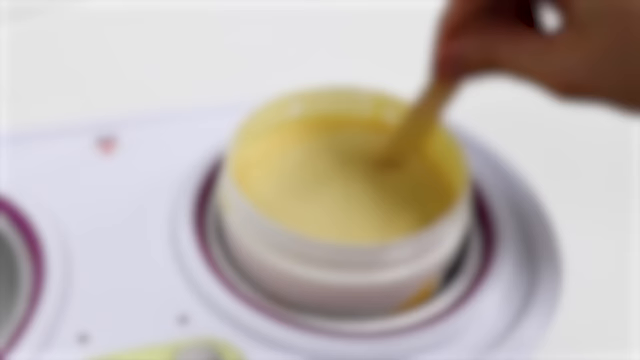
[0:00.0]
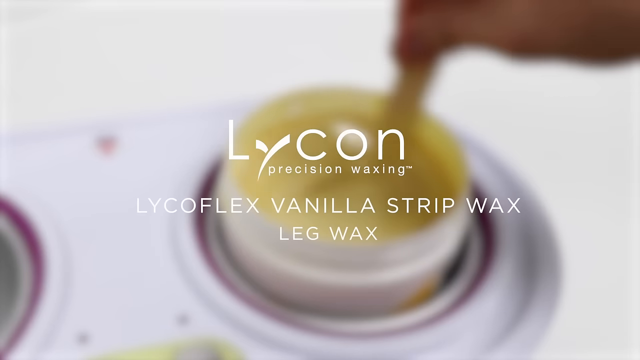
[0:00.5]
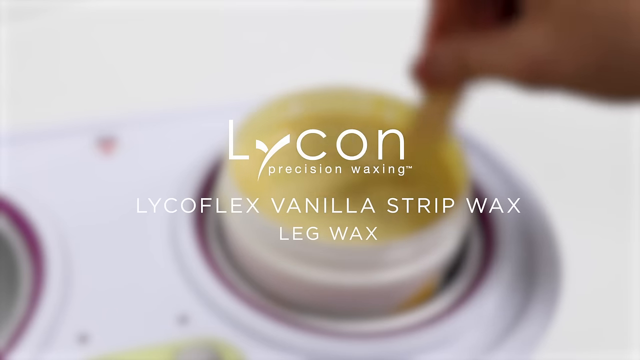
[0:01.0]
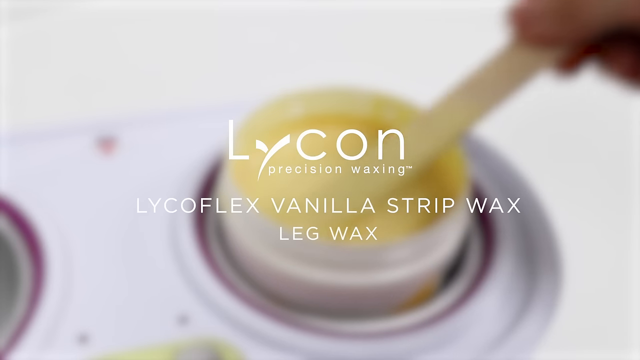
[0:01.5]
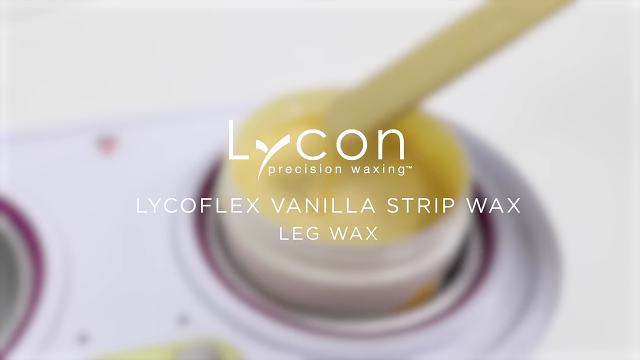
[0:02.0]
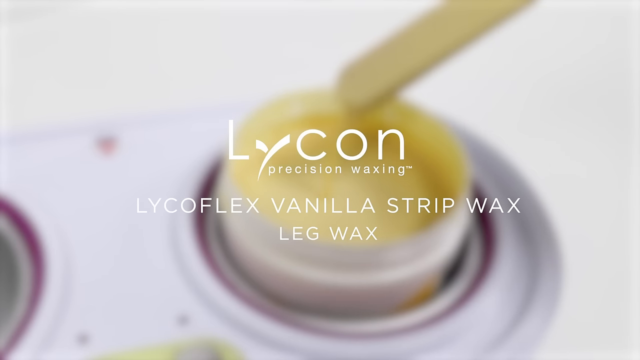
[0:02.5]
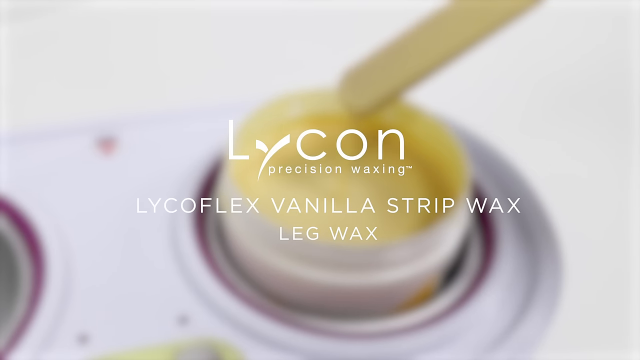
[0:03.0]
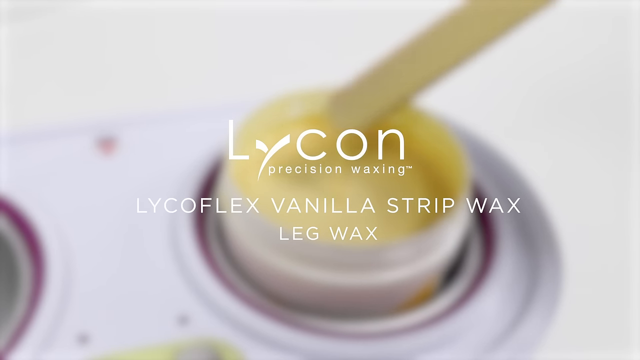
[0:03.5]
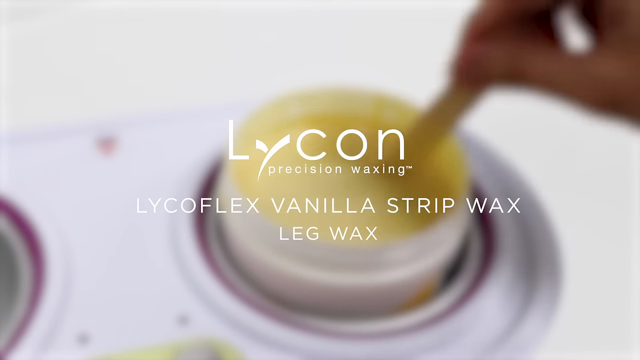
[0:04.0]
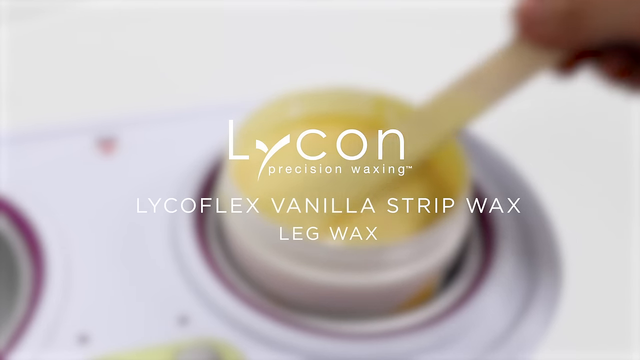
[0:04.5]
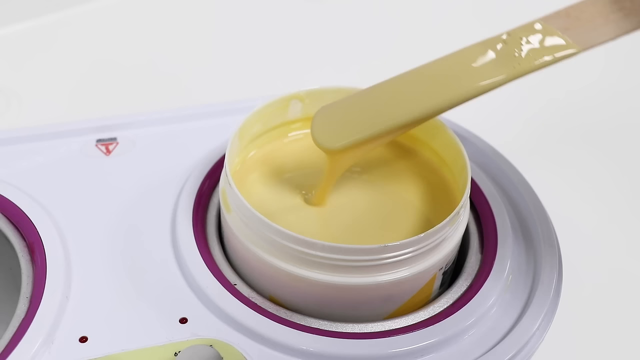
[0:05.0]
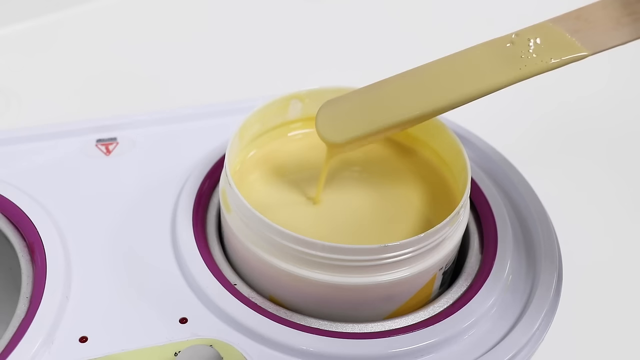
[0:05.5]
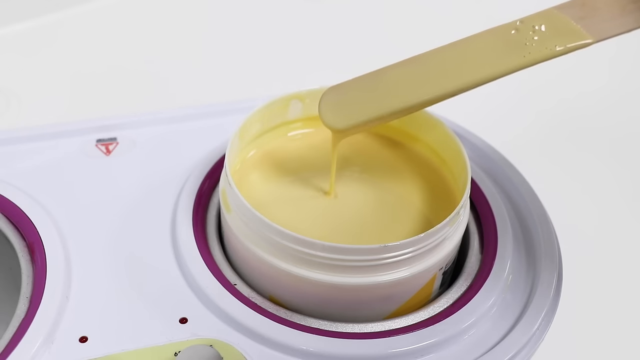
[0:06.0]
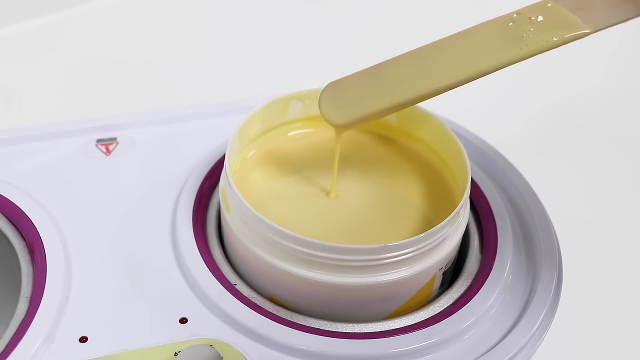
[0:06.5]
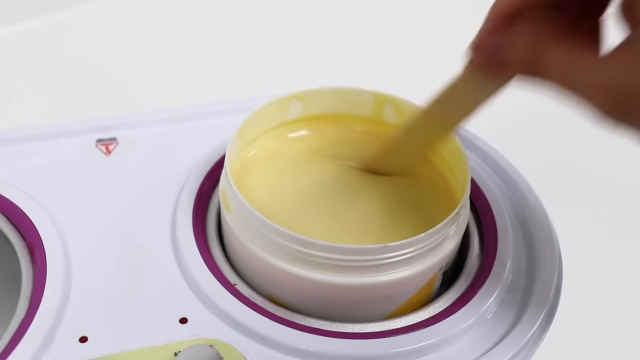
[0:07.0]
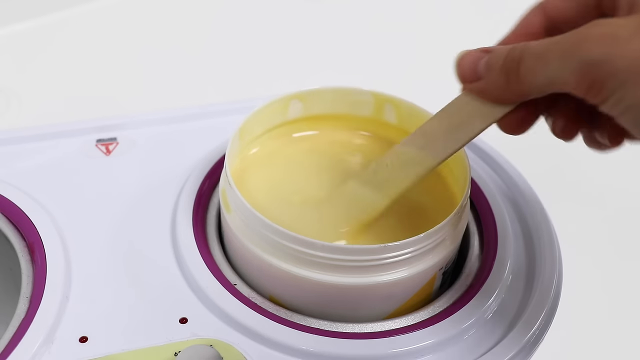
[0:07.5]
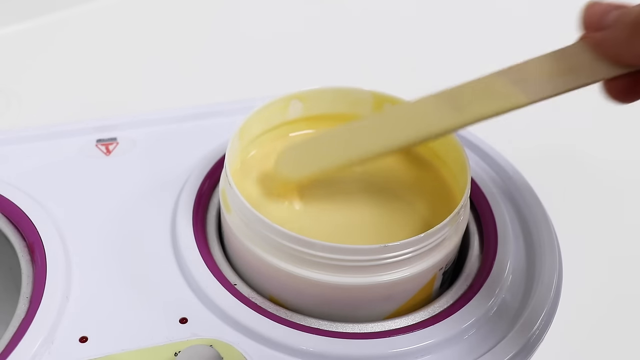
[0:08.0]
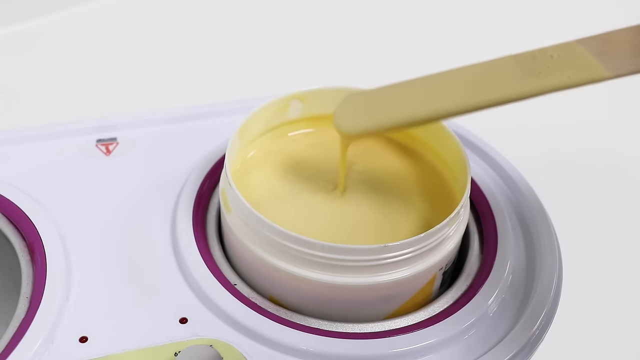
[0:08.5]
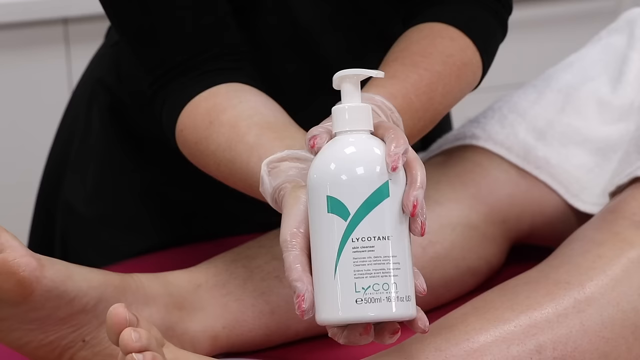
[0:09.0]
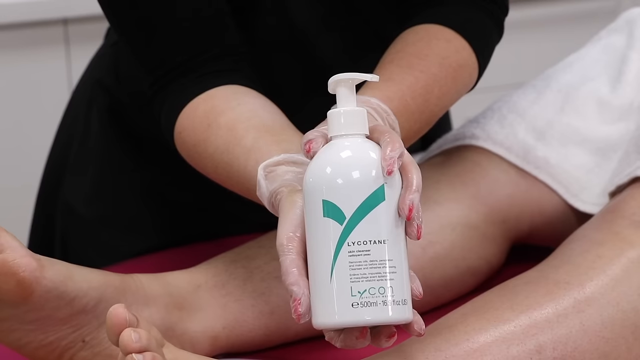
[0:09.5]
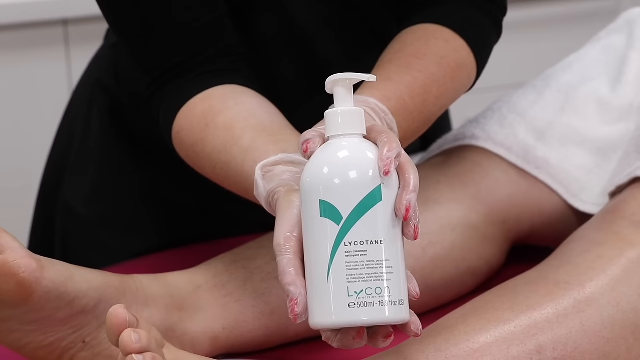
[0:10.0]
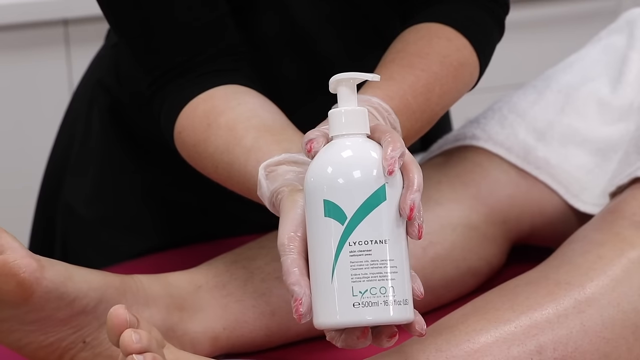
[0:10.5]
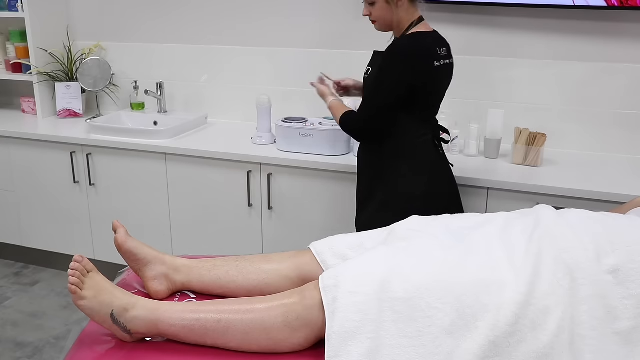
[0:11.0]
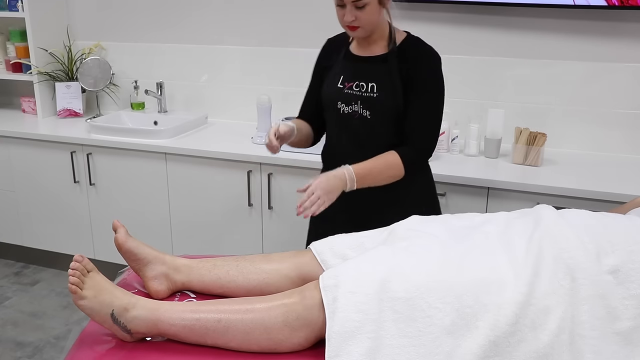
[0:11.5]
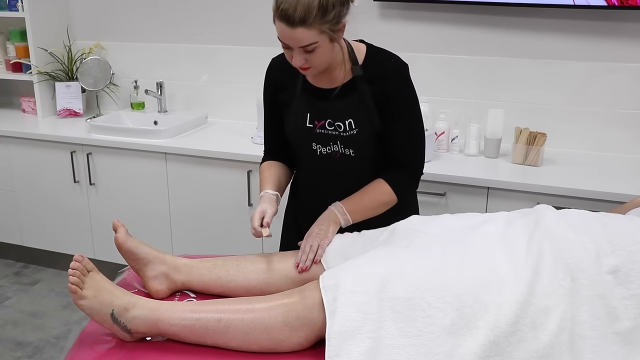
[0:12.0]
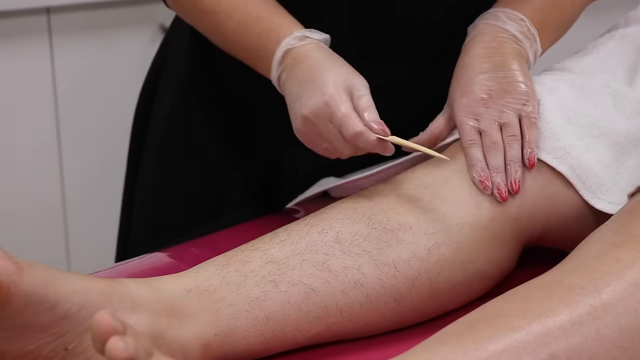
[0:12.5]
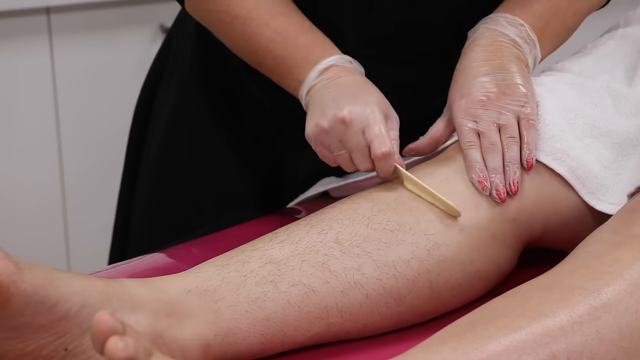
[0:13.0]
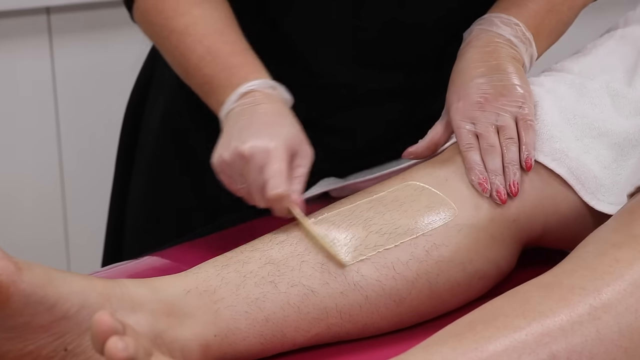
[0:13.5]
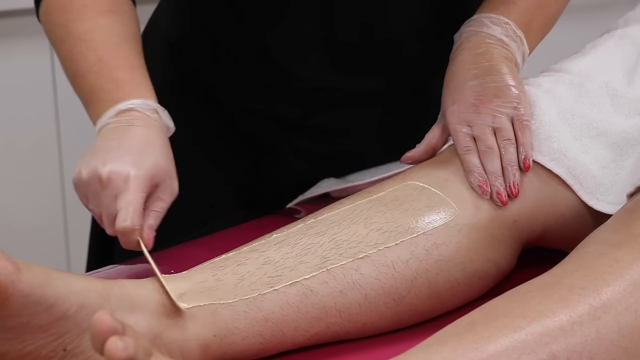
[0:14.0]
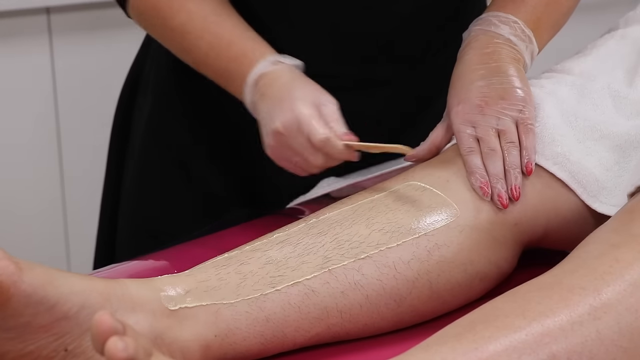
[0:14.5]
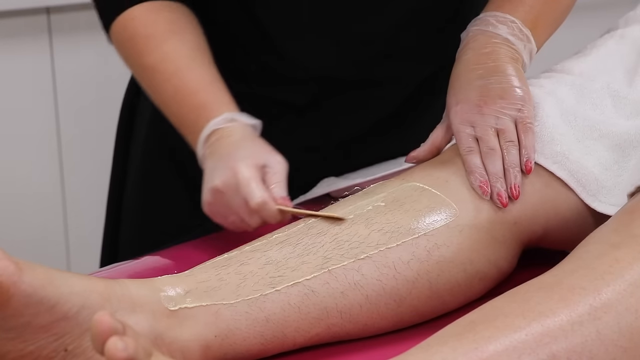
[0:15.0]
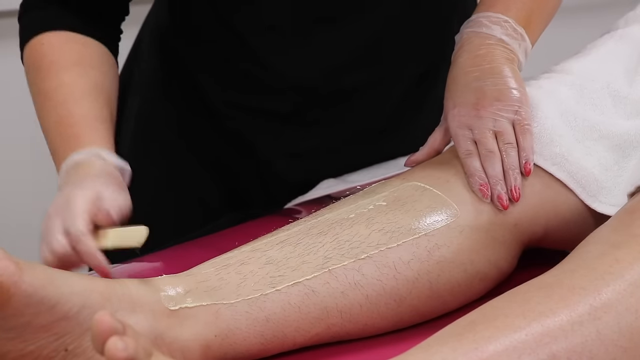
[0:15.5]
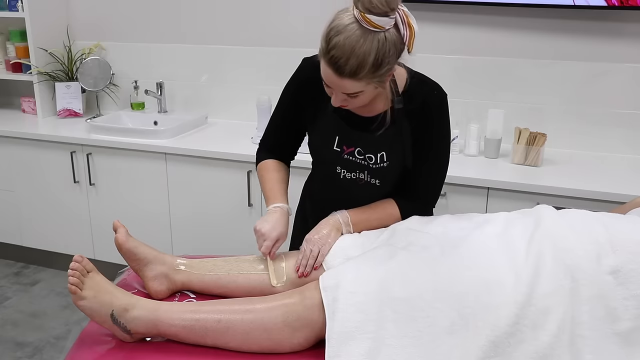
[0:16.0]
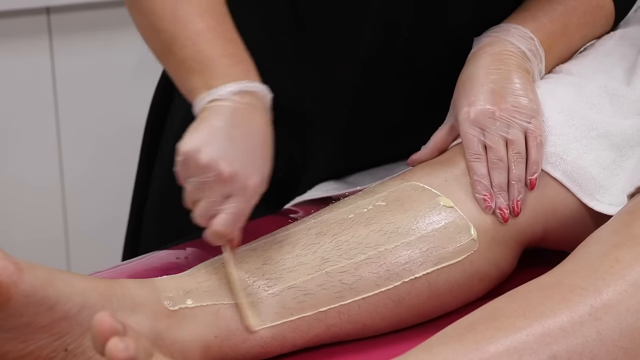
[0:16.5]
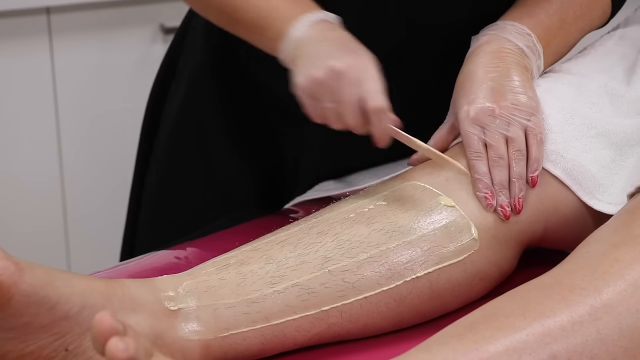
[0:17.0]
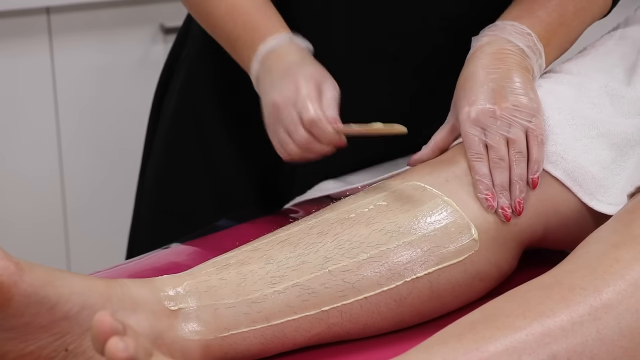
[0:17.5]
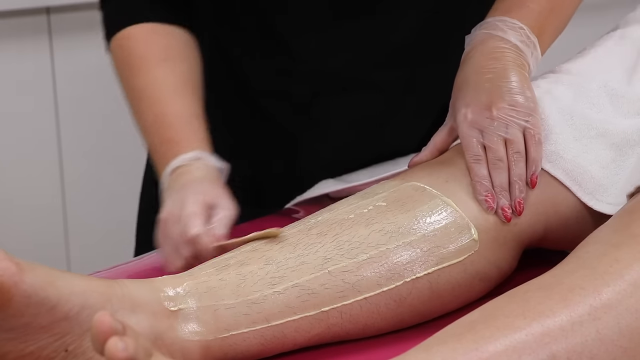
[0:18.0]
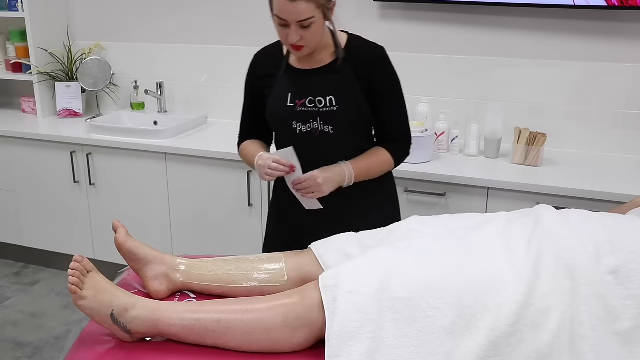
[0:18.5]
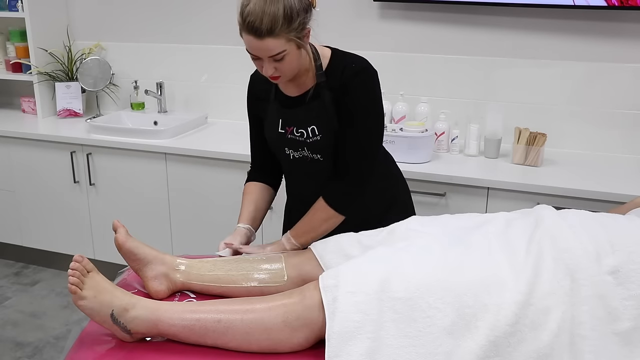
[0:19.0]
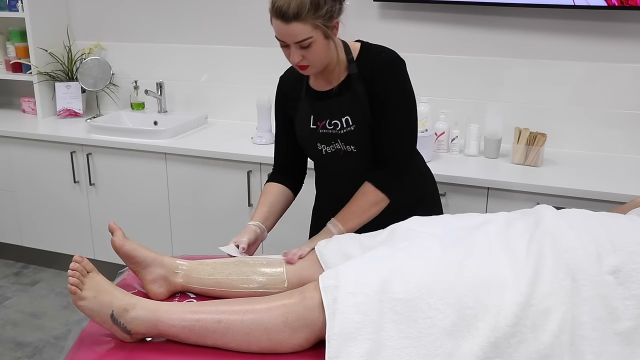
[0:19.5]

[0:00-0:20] A Licon Flex vanilla strip wax for leg waxing is featured. Someone mixes a substance, probably the leg wax, with what looks like a wooden popsicle stick. The material is light yellow, kind of like banana ice cream, and is in a white plastic container or cup. Next, the Licon product that will be used to wax the legs is shown in a container like a body wash bottle. A person has their legs spread with this wax. The masseuse wears gloves and has red nails, and she applies the wax onto the legs of the person being waxed, who has a tattoo on their left ankle.